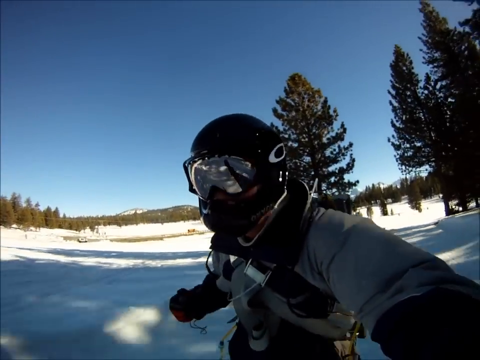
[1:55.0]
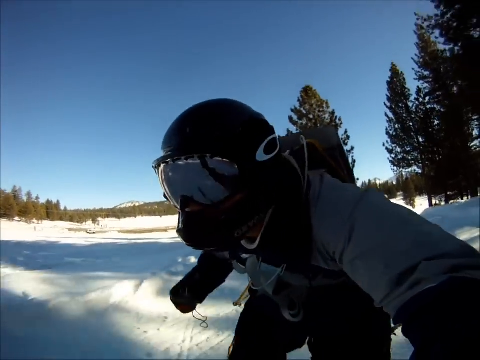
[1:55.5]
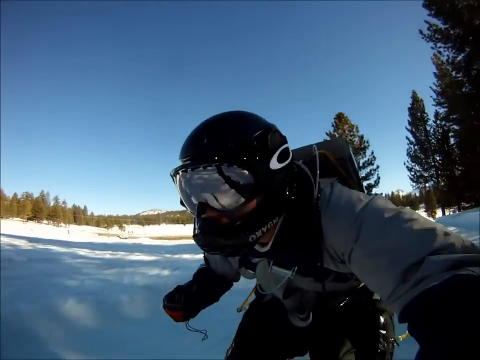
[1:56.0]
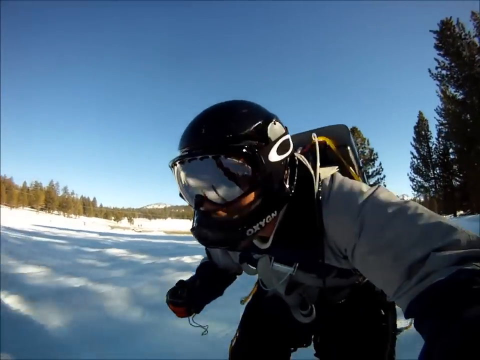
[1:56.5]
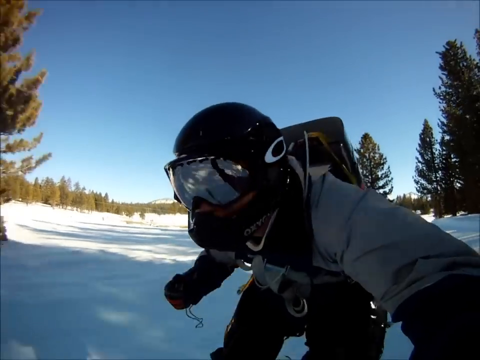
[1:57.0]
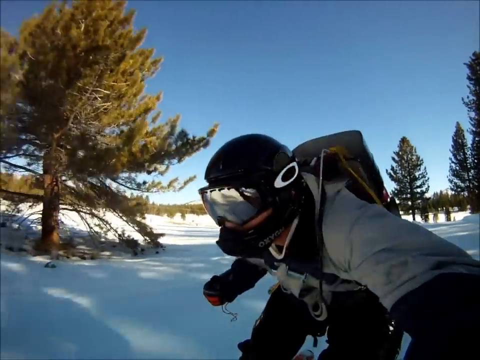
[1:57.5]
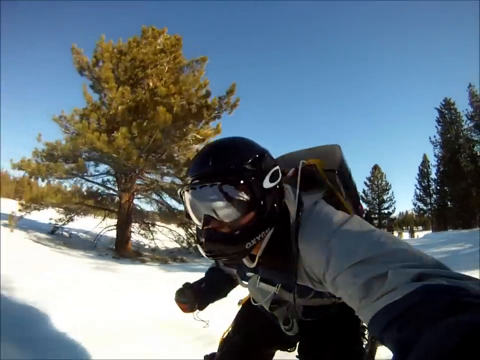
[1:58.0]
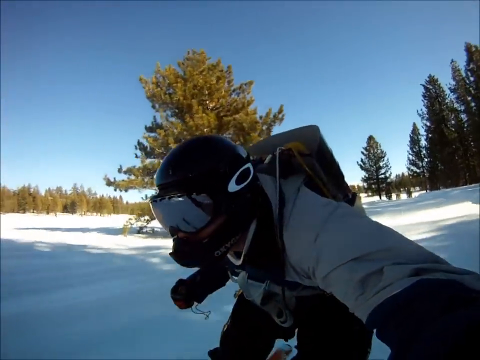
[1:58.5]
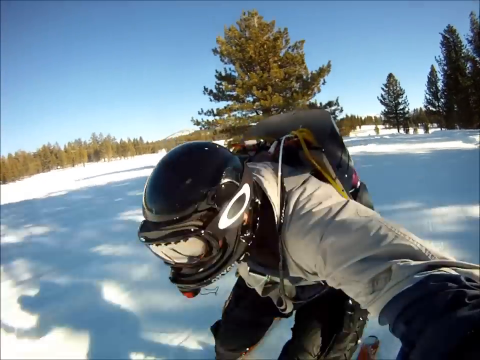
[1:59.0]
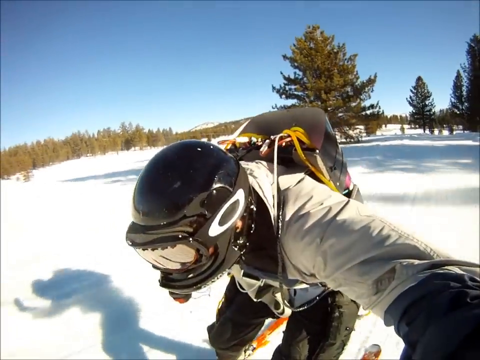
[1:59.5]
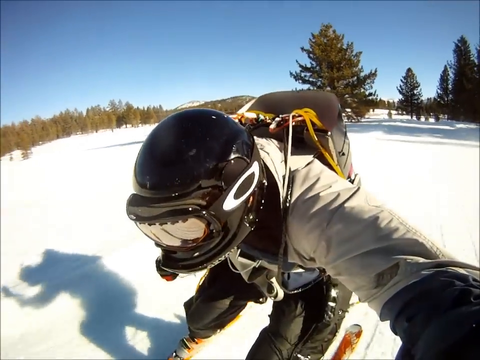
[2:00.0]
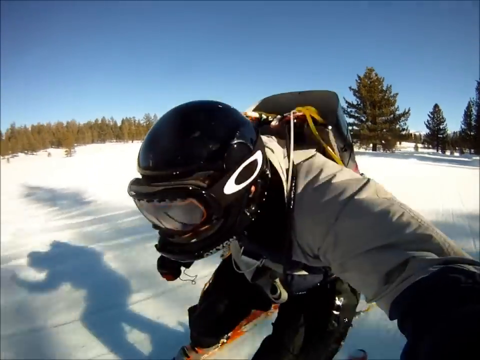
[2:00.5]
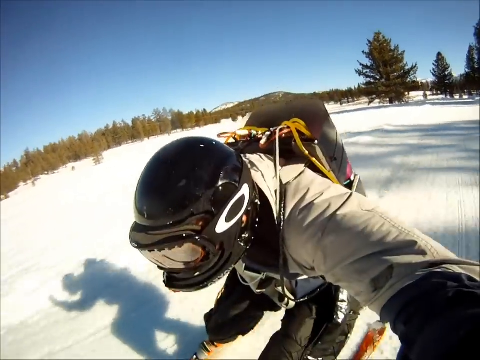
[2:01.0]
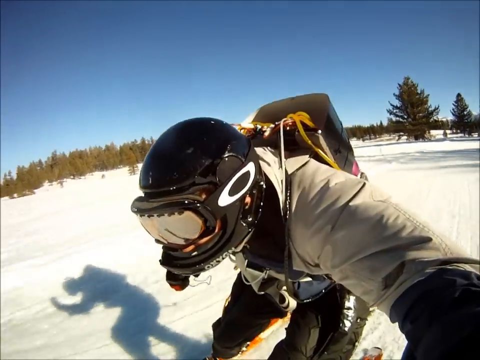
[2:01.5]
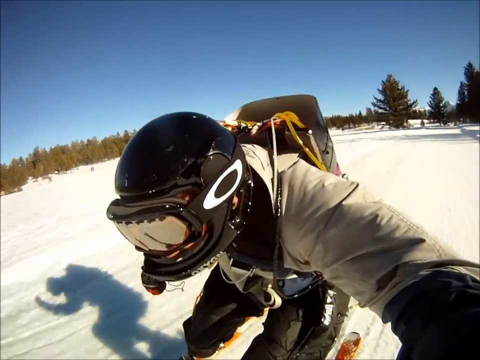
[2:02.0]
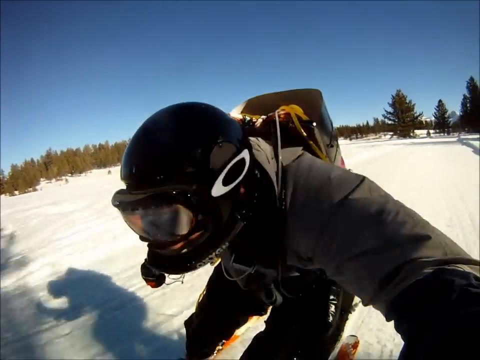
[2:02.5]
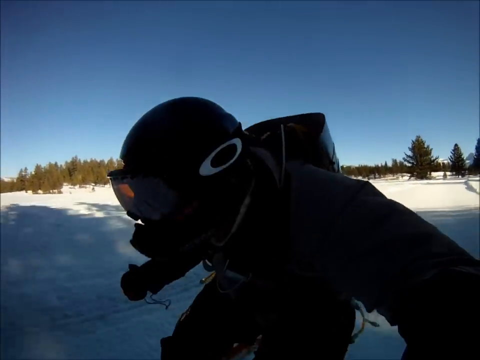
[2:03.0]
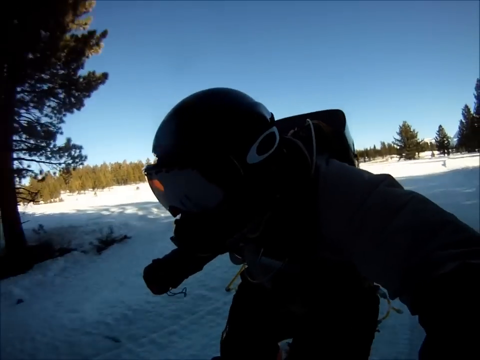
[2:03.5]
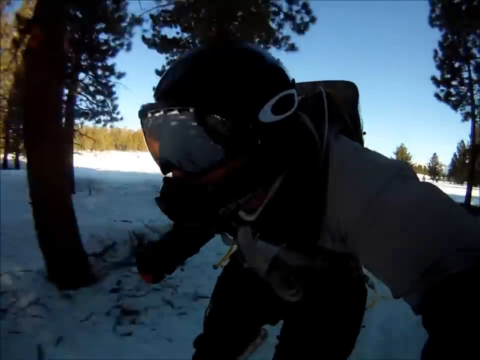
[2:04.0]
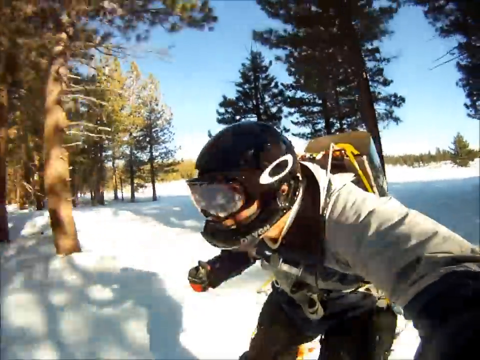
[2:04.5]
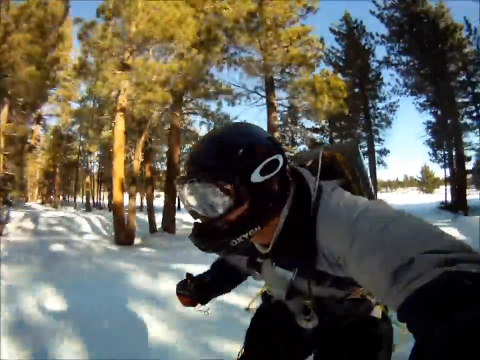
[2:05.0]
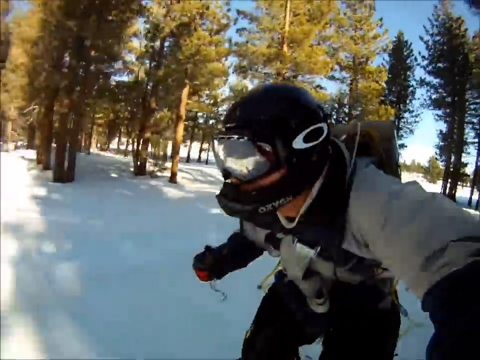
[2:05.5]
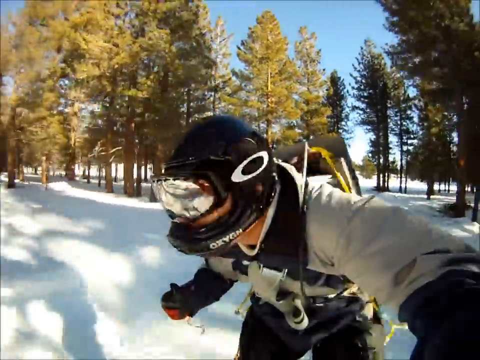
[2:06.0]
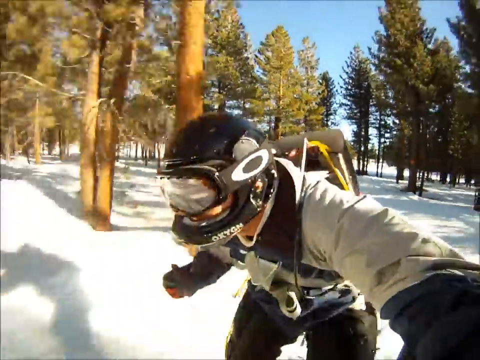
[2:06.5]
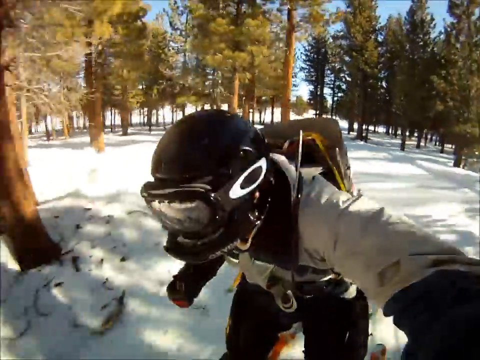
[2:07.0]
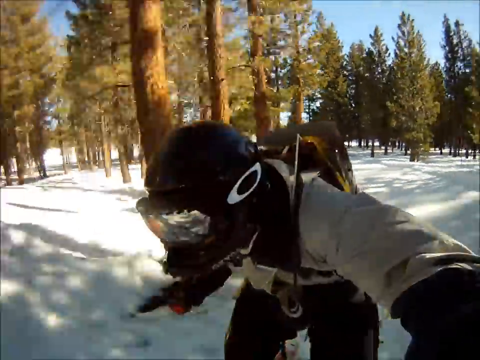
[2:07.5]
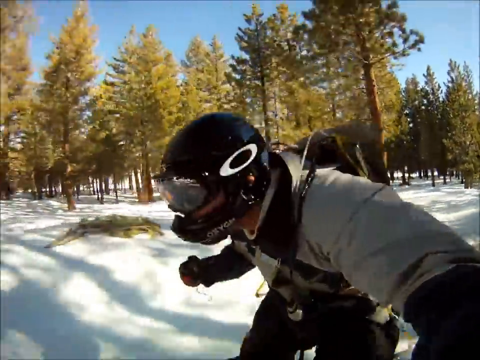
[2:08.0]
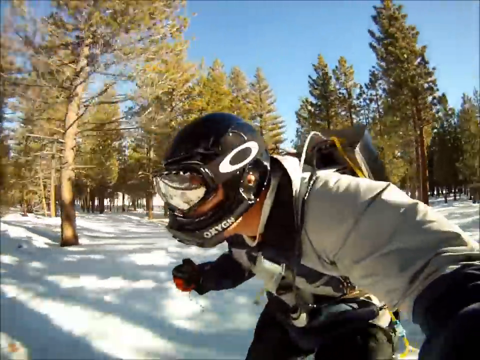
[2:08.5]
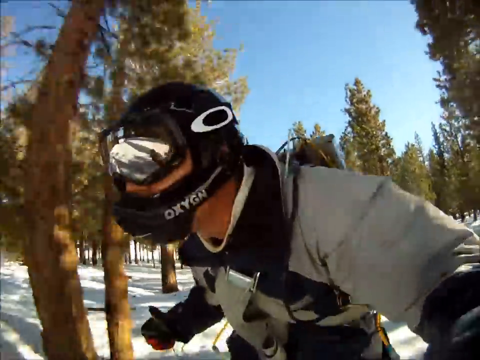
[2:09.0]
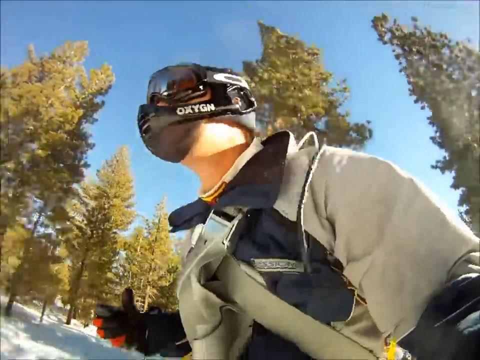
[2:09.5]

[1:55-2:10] He is seen through the camera in his left hand, held a little in front of him. He passes through a forest again along a trail or road. As he comes out he is crouched over, but in the bright sunlight he stands fully erect. He apparently holds something in his right hand, possibly a control for the jet pack. He wears goggles, and the goggle strap is apparently visible over his helmet. His parka looks sort of gray with some black features. The pack looks black, with what may be yellow tubing on it.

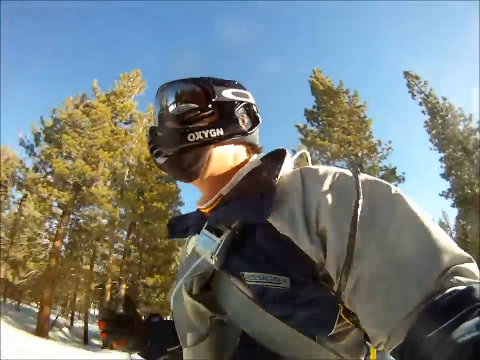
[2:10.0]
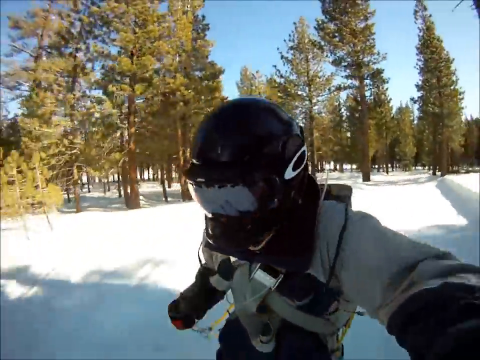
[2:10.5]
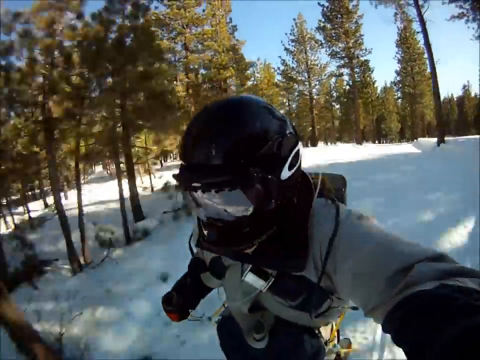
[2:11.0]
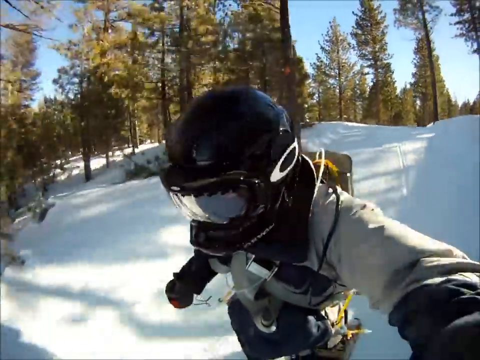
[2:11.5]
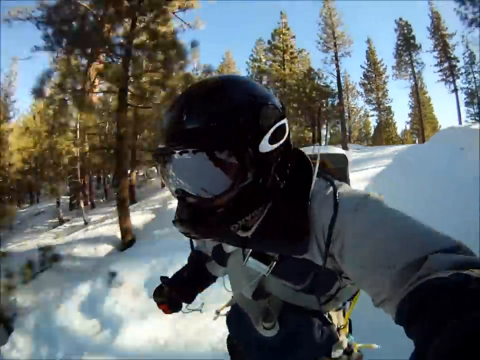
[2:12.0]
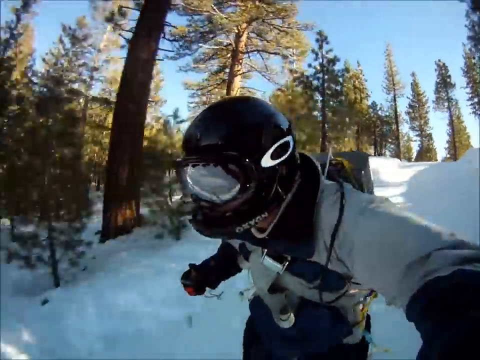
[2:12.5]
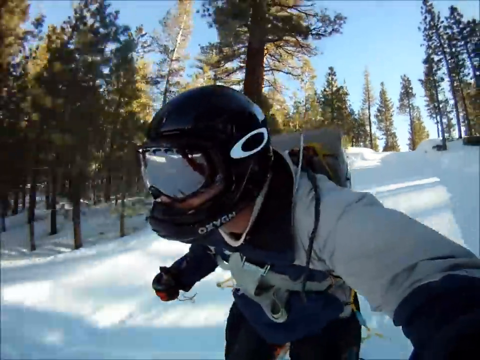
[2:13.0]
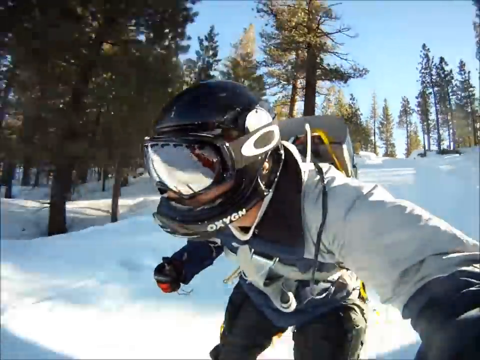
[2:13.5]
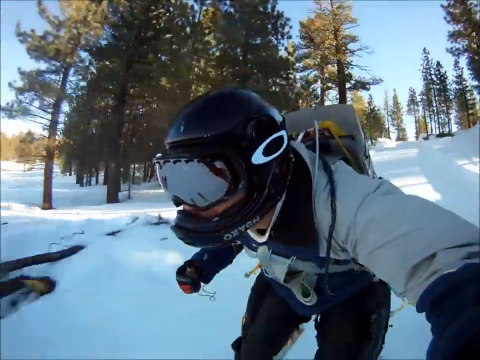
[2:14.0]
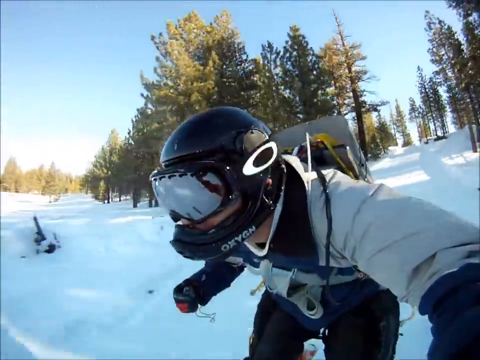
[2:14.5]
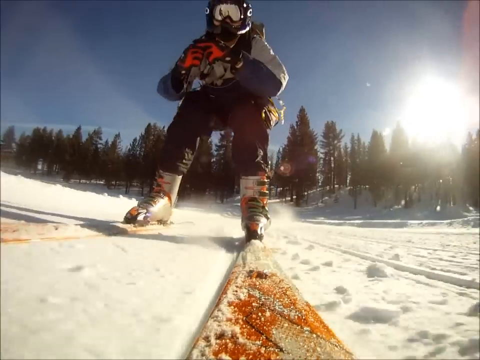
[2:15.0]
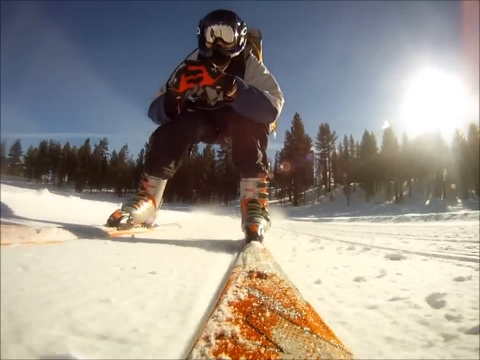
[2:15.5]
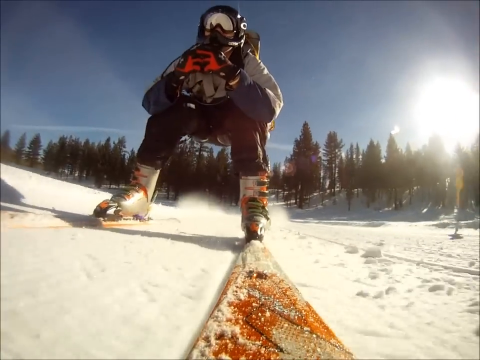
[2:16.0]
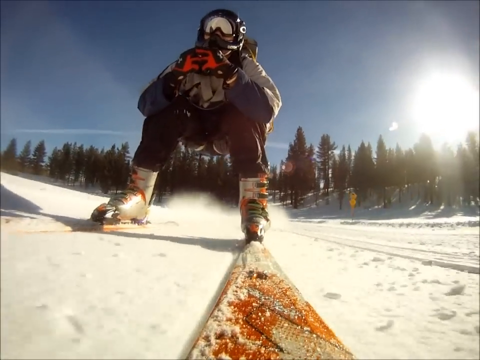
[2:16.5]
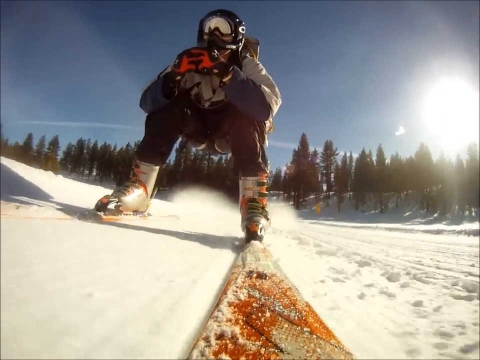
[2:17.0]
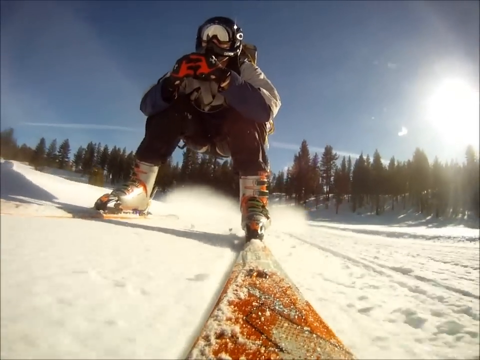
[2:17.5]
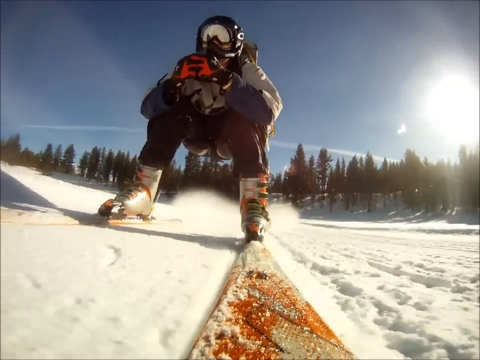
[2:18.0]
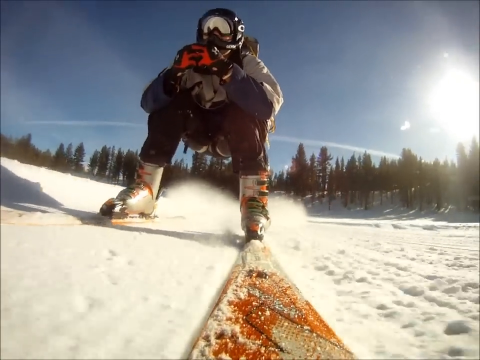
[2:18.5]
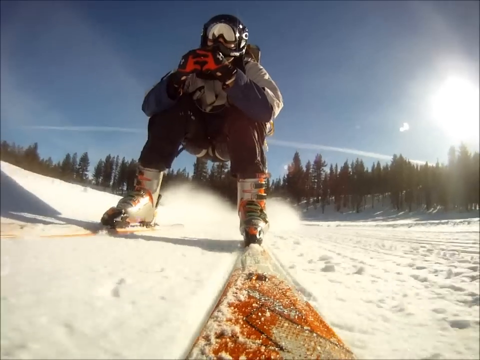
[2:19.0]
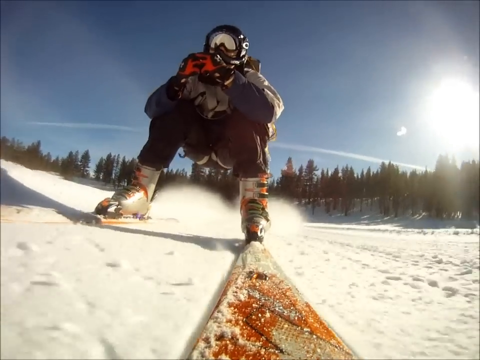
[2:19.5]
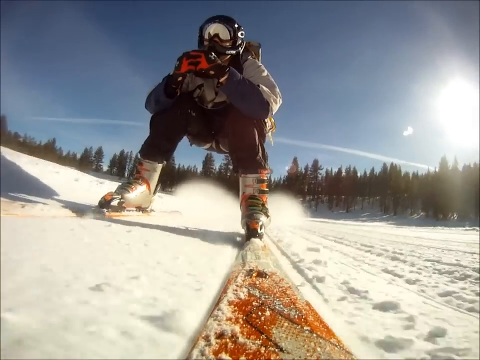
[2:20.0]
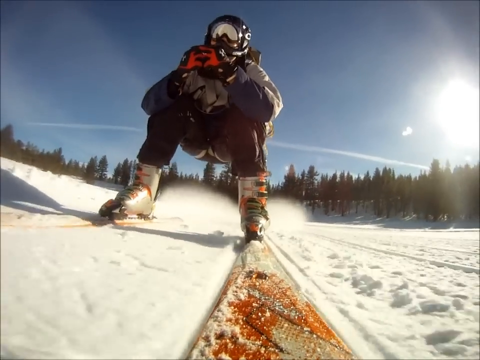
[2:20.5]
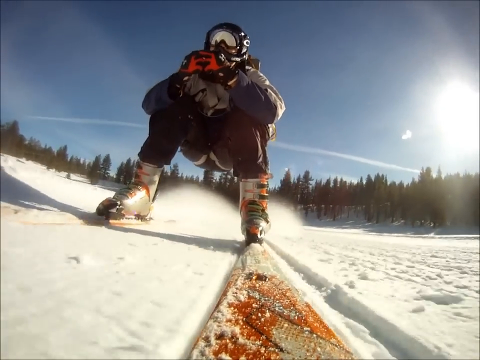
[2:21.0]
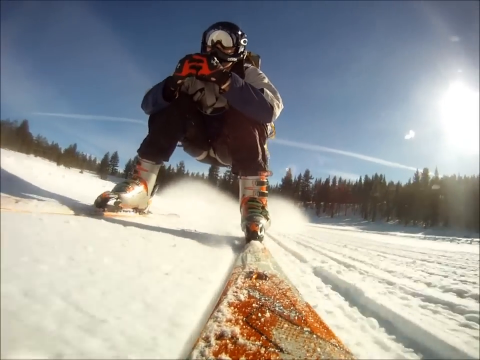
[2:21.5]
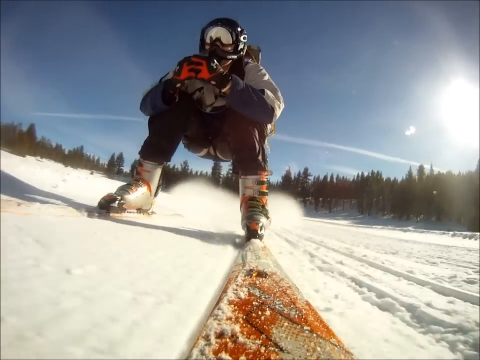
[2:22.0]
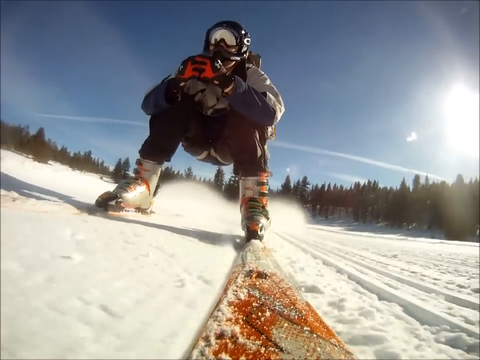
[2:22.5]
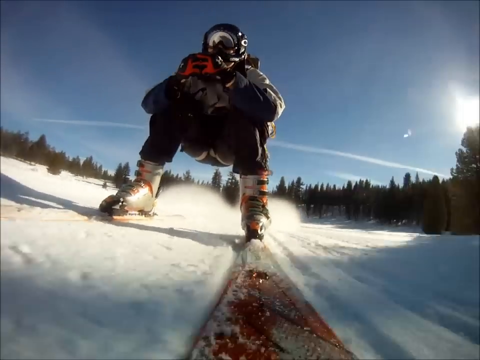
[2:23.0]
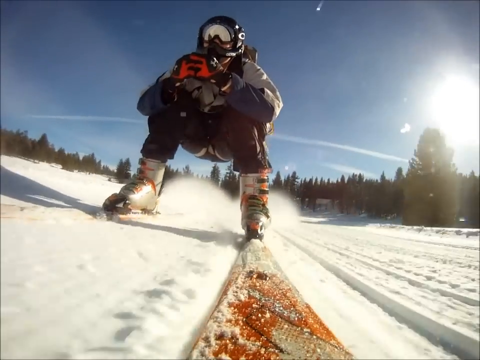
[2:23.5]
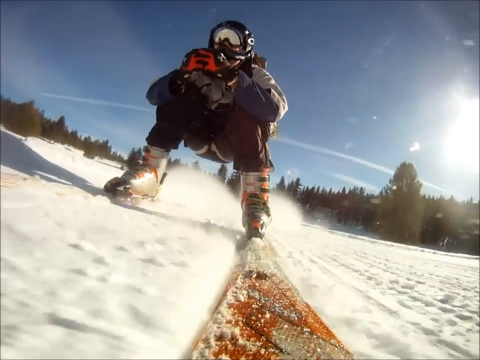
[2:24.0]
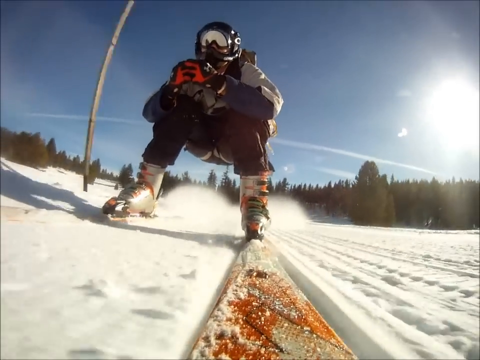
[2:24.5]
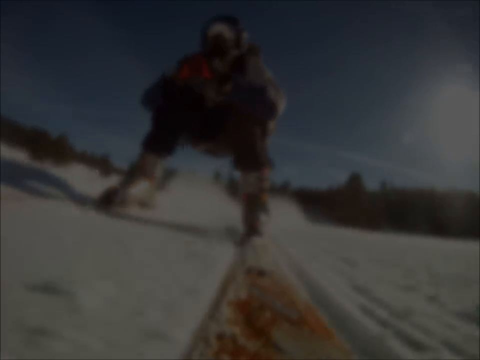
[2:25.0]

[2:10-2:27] He zooms along as the view switches from a side view to the left ski view. Something puffs up behind him, either snow or vapor from the jet pack. In the view from the ski tip, sort of two mounds grow behind him, possibly jet pack exhaust or snow kicked up by his skis. A contrail is in the sky behind him. The ski tip view shows things zooming by, and the GoPro camera in his left hand is visible from it.